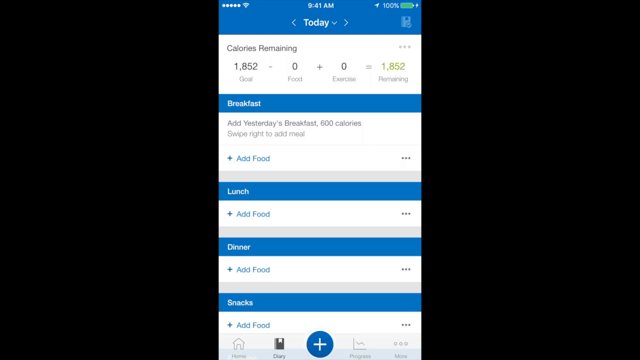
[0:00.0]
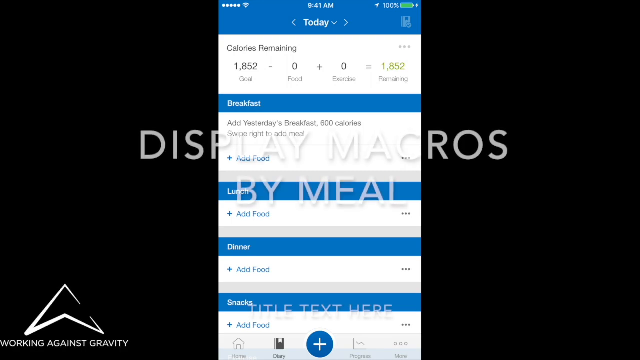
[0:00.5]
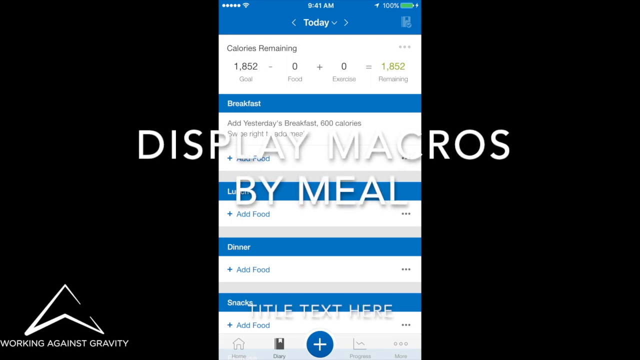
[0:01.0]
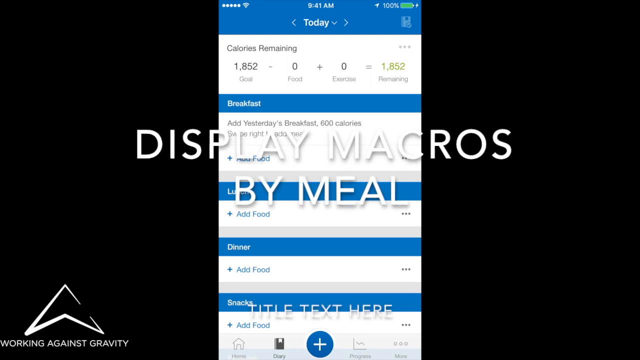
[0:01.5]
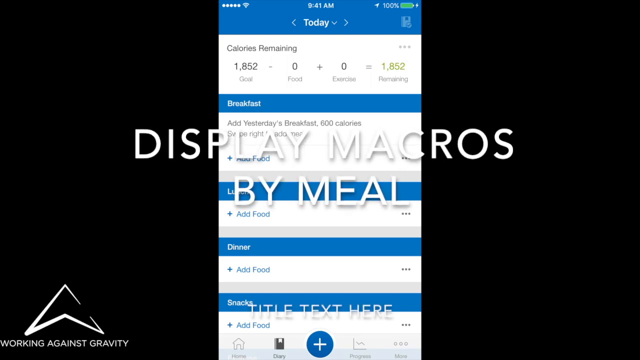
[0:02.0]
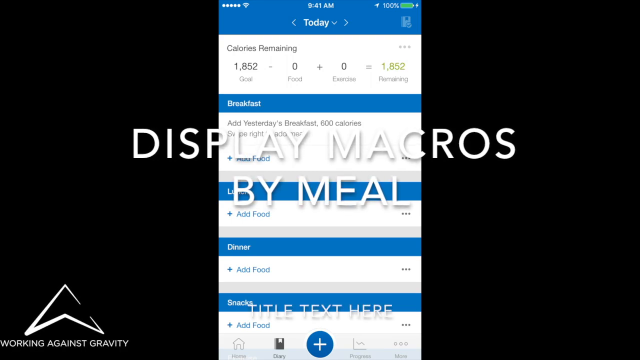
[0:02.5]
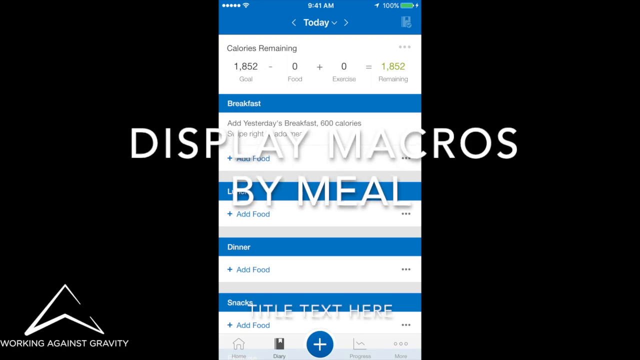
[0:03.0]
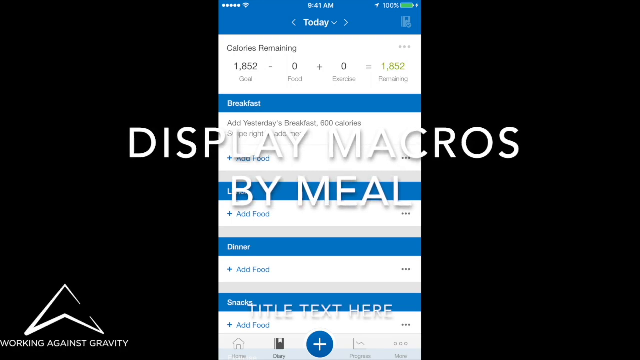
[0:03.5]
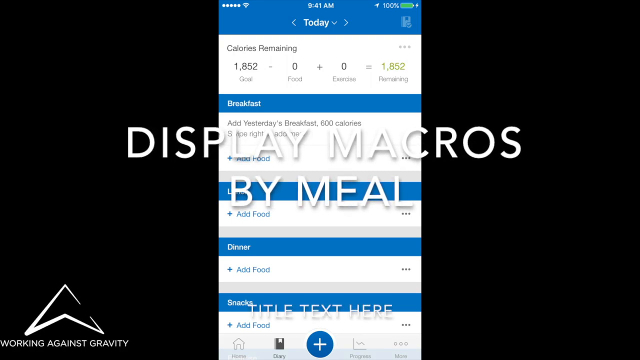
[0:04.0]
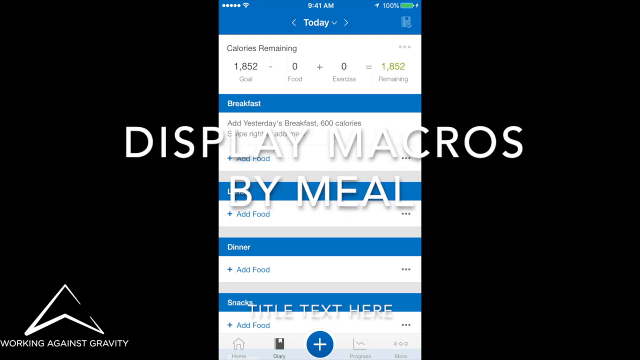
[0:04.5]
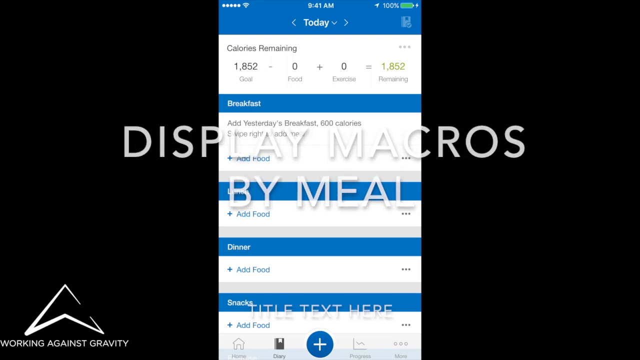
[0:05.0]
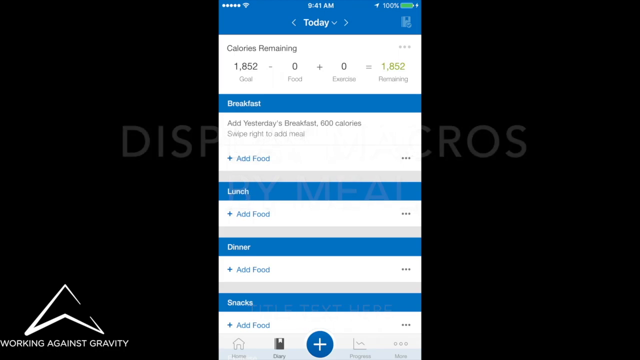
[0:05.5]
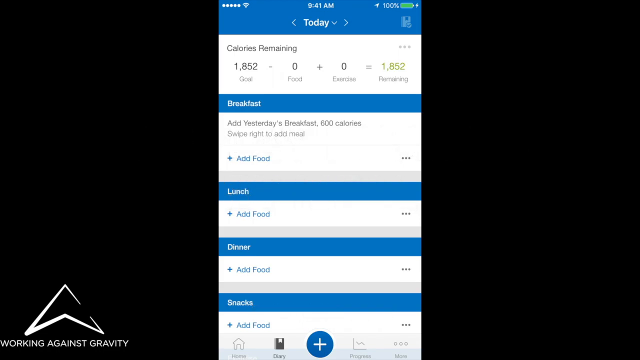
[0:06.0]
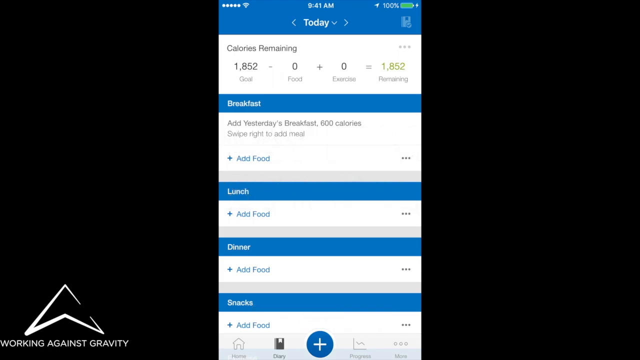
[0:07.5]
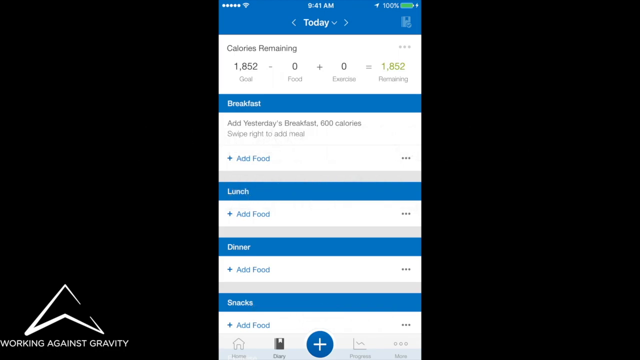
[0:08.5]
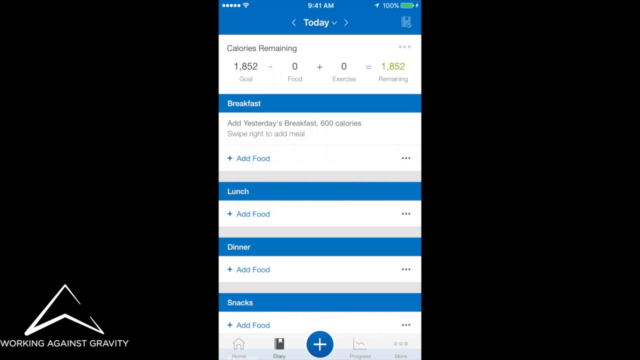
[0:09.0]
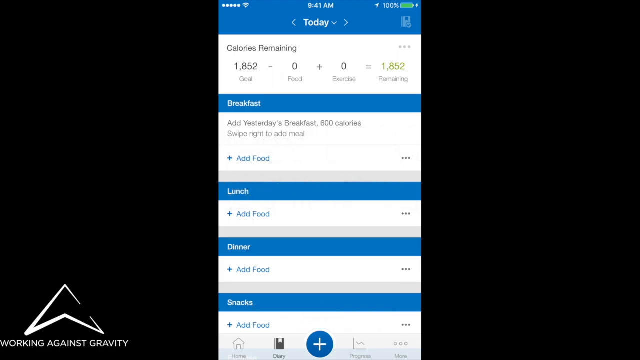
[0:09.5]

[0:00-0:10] The screen has a black background and is divided by the display of a device, either a cell phone or a tablet, in the middle. One third of the screen is black on the left and one third is black on the right, and the middle shows what looks like a calorie counting app of some kind. Greying letters initially appear from behind the app face; bold, all-caps white letters then emerge from behind it and come across the screen, reading "display macros" on the first line and "by meal" on the bottom line.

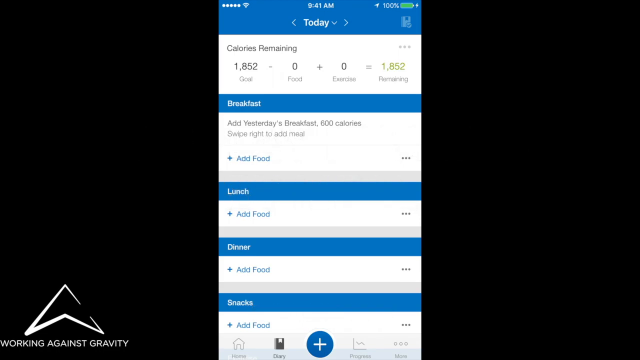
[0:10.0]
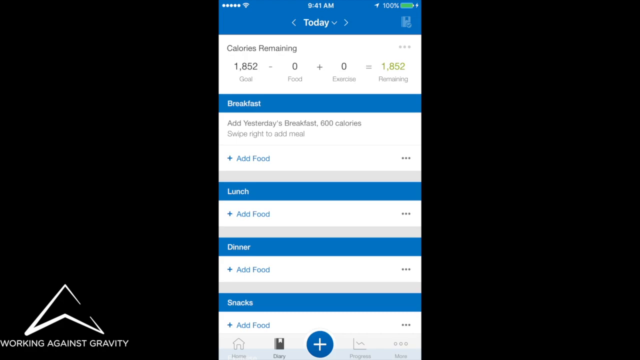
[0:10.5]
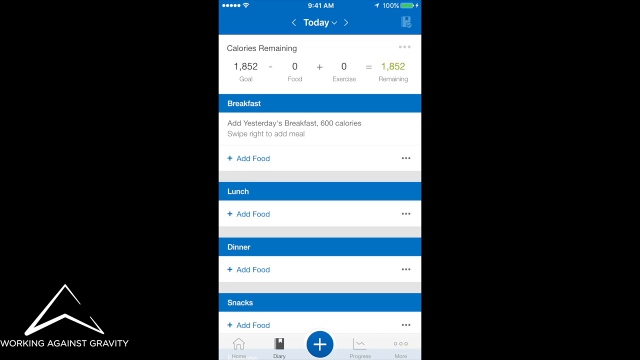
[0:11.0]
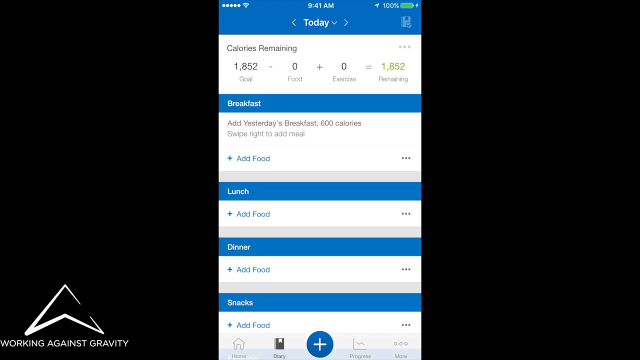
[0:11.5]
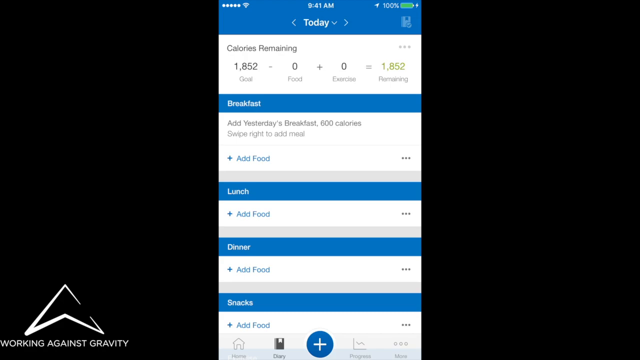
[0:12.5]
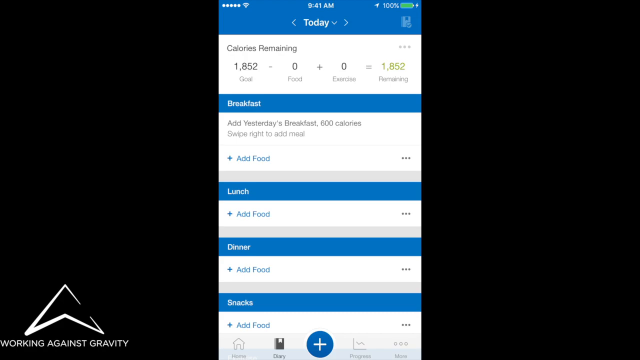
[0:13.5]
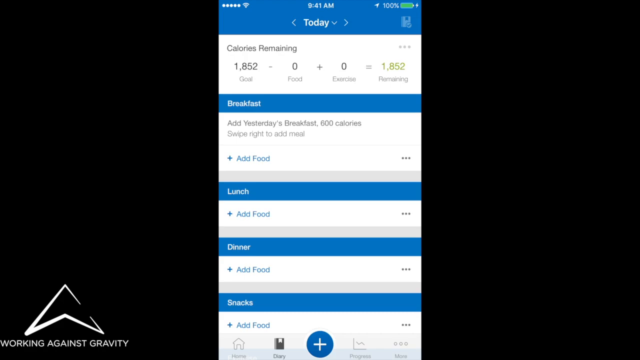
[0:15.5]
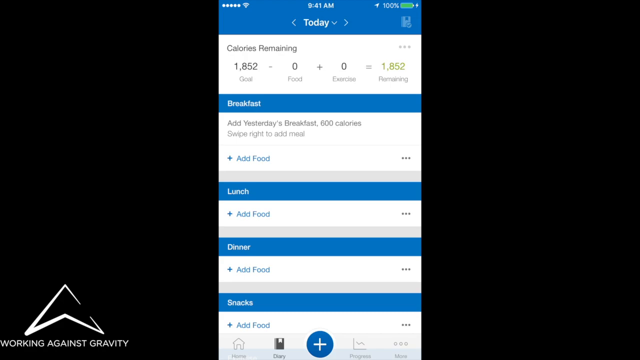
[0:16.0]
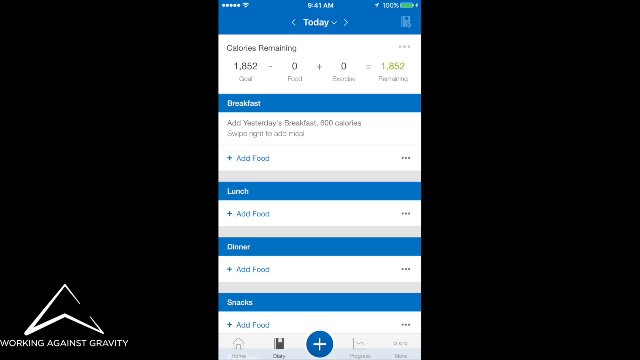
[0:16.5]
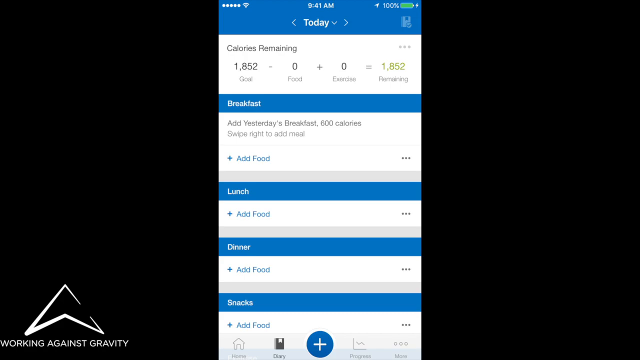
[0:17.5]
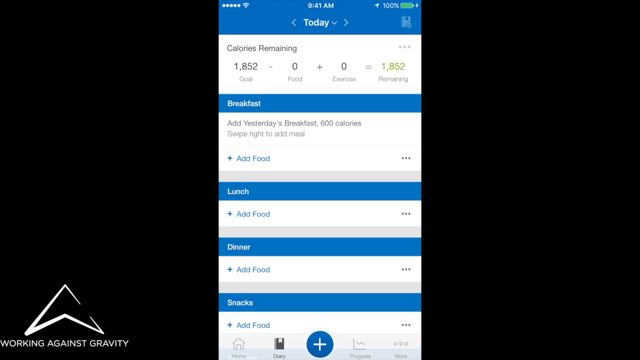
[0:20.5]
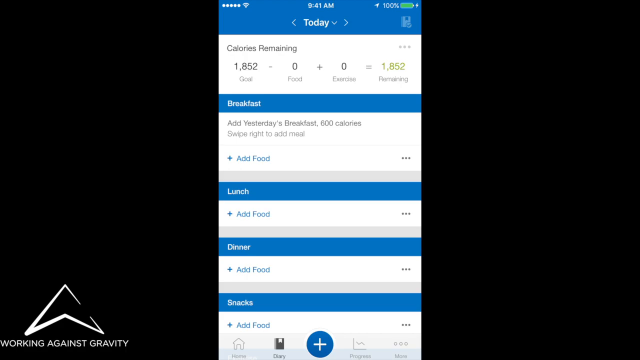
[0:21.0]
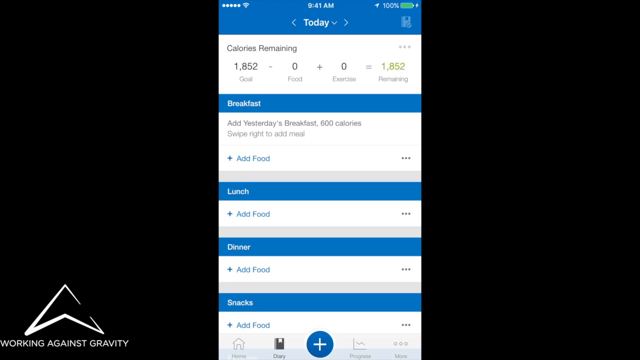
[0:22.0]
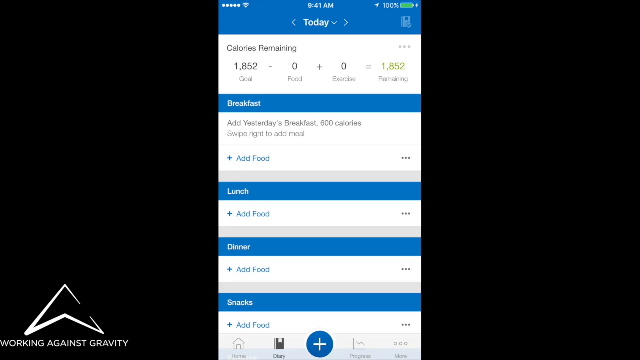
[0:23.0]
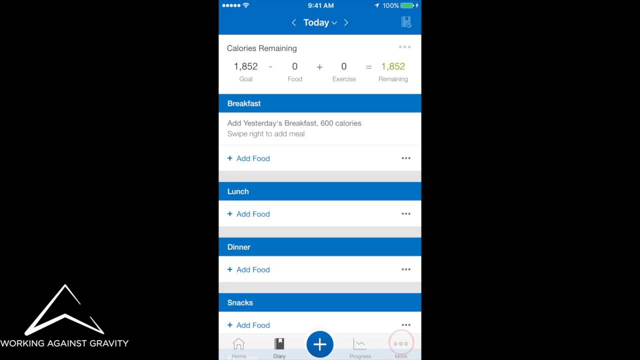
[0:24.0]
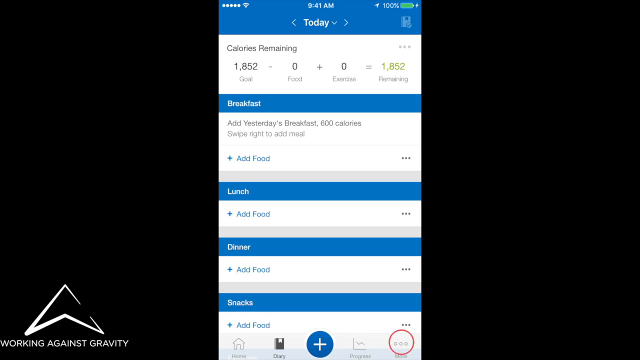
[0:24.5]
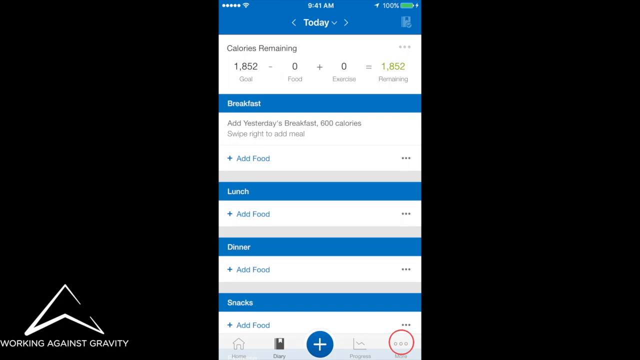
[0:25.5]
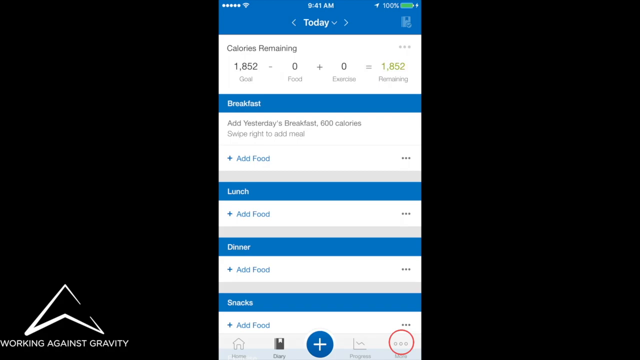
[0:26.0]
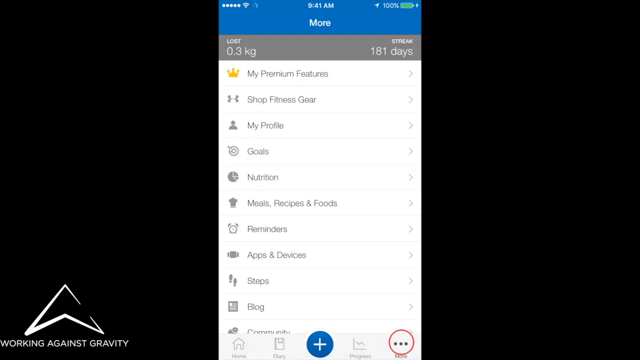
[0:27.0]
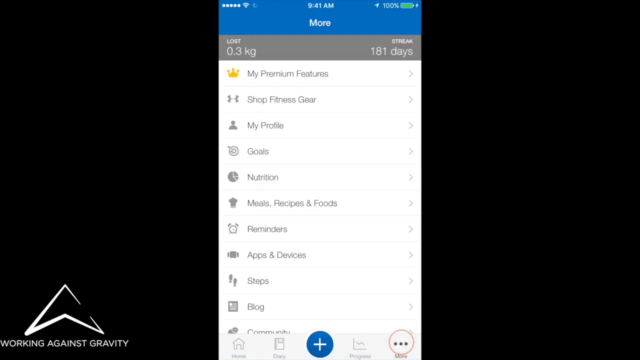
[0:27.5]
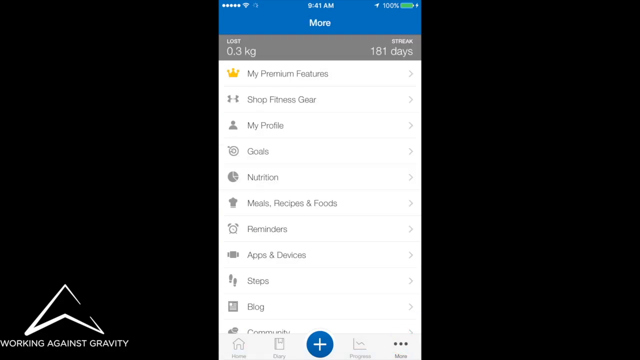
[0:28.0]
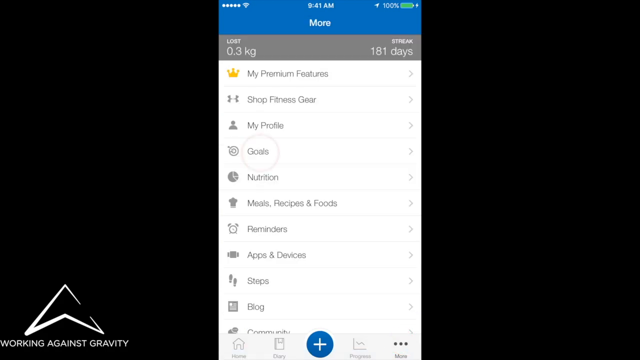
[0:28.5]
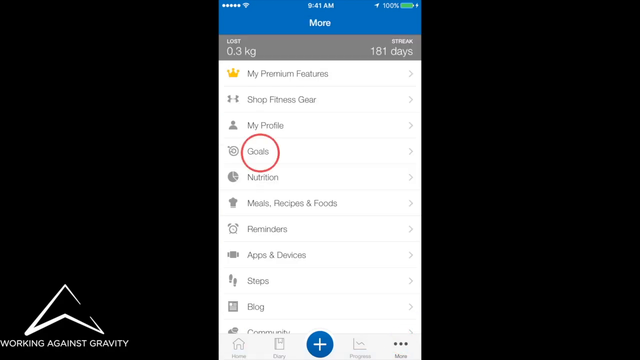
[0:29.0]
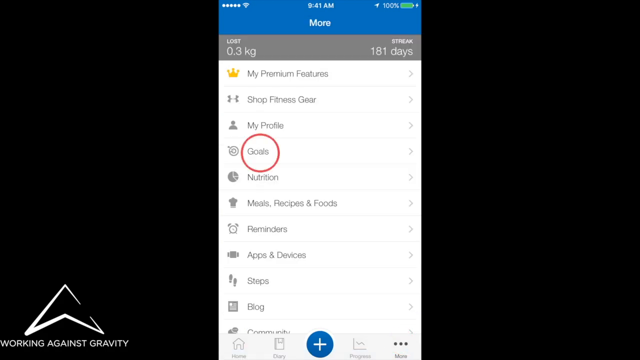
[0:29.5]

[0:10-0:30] The app is open in the middle of the screen. A battery indicator at the top right shows 100%, the top middle reads "9.45am" in white lettering, and on the far left a wifi signal shows all 5 dots full. A blue strip runs from left to right across the top. Below the time, "today" appears in white letters, with an arrow pointing left, an arrow directly to the right of "today" pointing down, and then an arrow pointing right. Below that, "calories remaining" appears in grey on white, followed by the calculation 1852 (the goal) minus 0 food plus 0 exercise equals 1852 remaining, with the last 1852 in a greenish colour. In the bottom left, "working against gravity" appears next to a triangle shape whose bottom is also triangular, so it has no flat base. Headings for breakfast, lunch, dinner and snacks are visible.